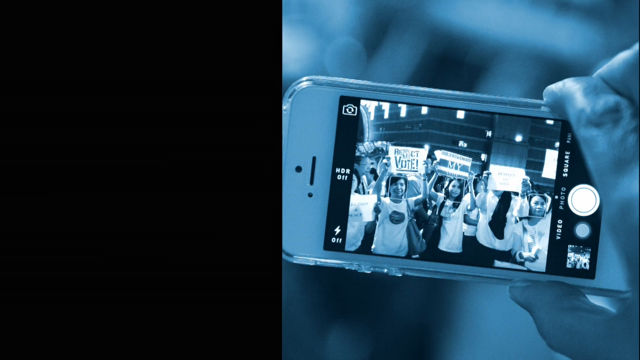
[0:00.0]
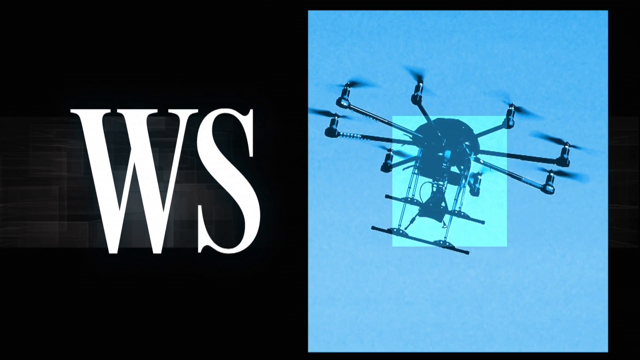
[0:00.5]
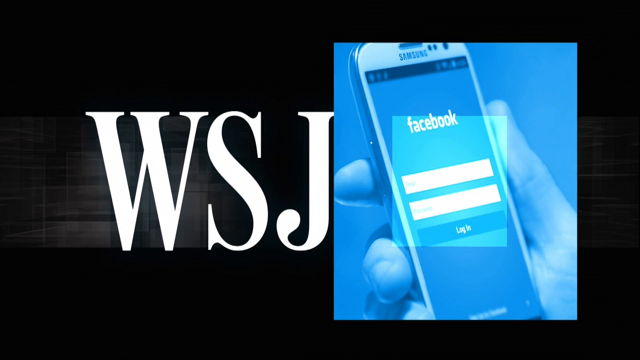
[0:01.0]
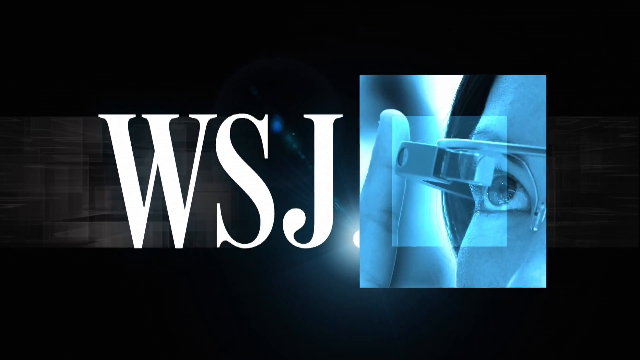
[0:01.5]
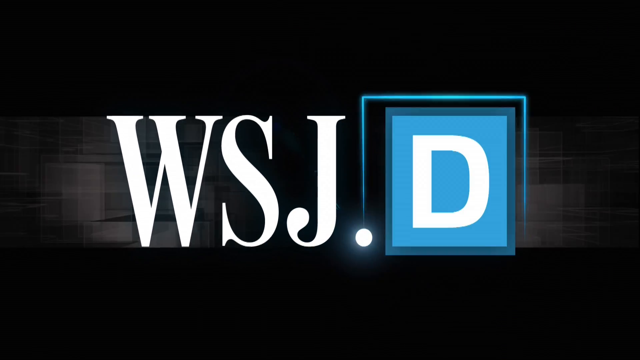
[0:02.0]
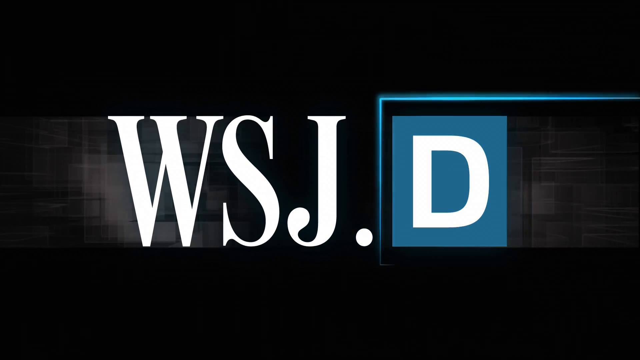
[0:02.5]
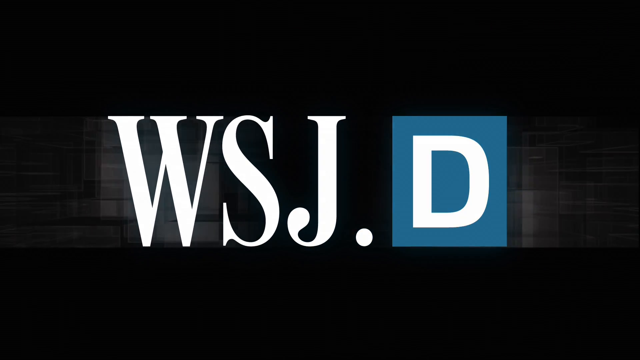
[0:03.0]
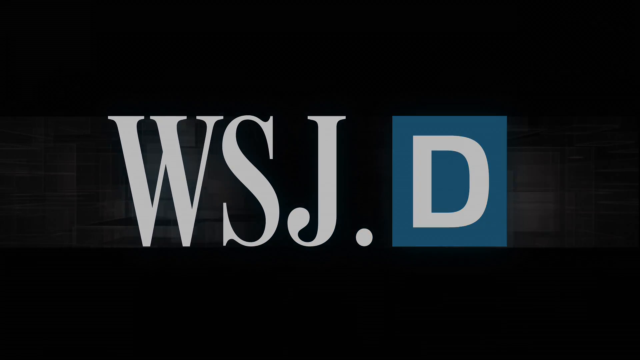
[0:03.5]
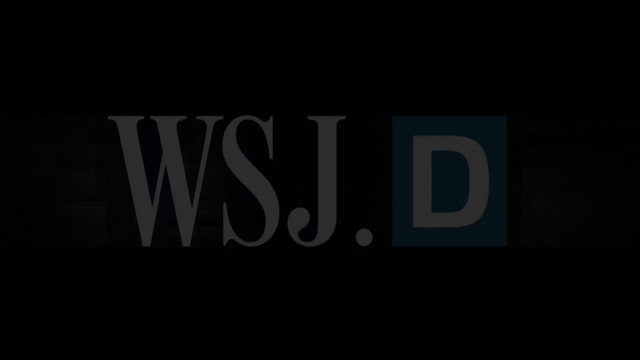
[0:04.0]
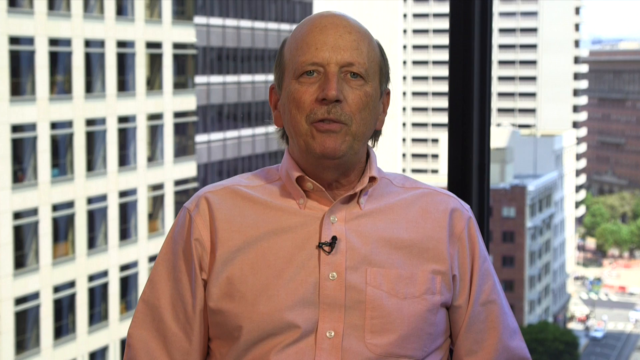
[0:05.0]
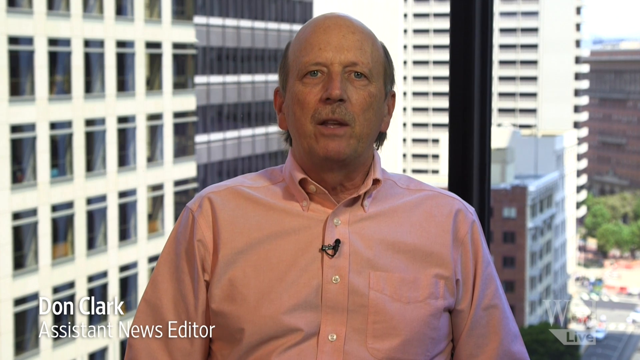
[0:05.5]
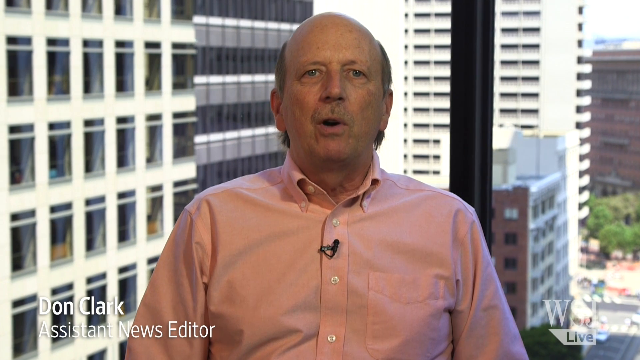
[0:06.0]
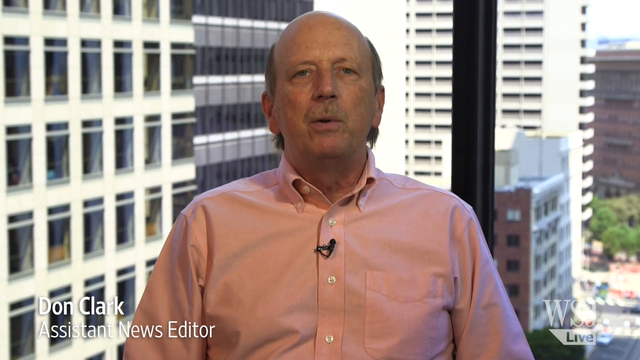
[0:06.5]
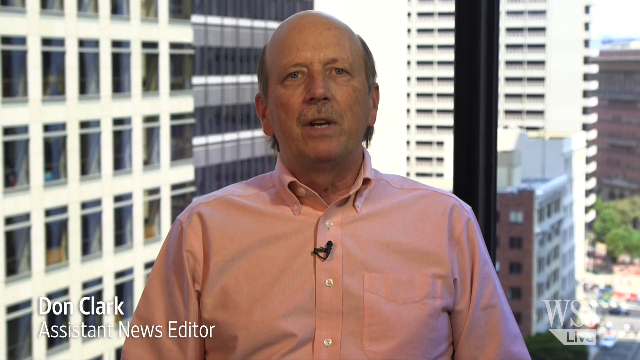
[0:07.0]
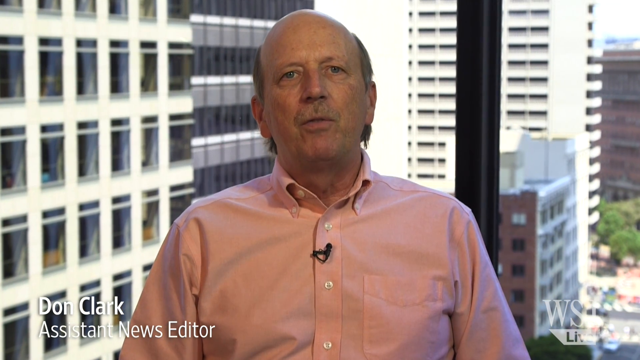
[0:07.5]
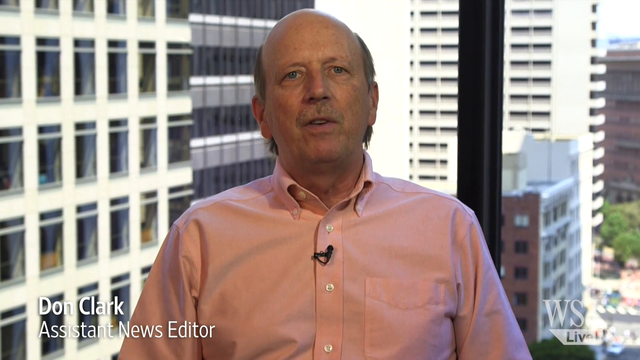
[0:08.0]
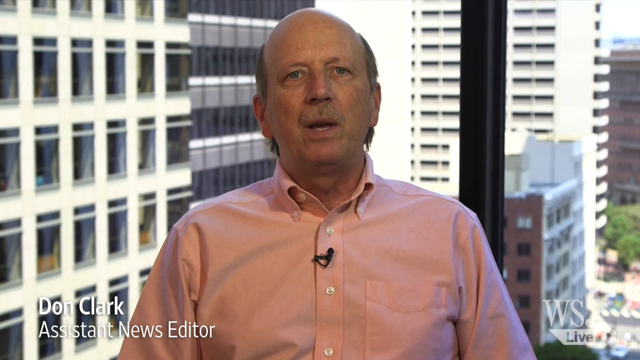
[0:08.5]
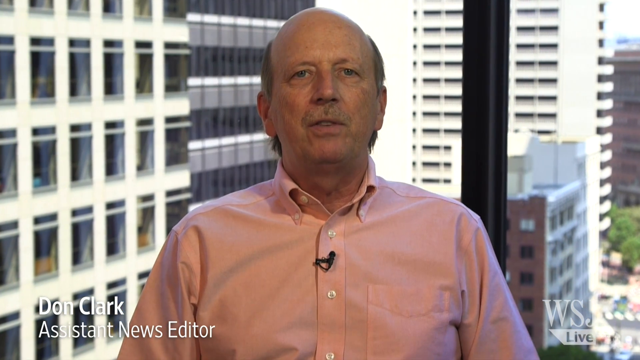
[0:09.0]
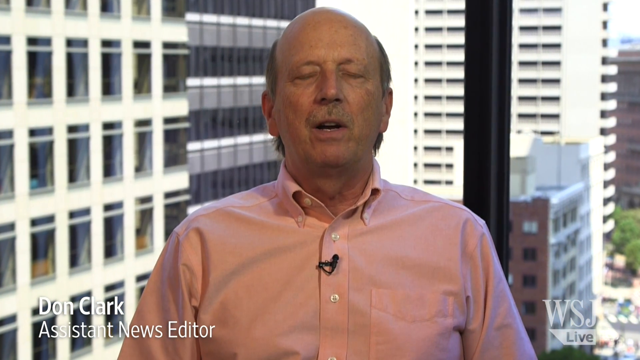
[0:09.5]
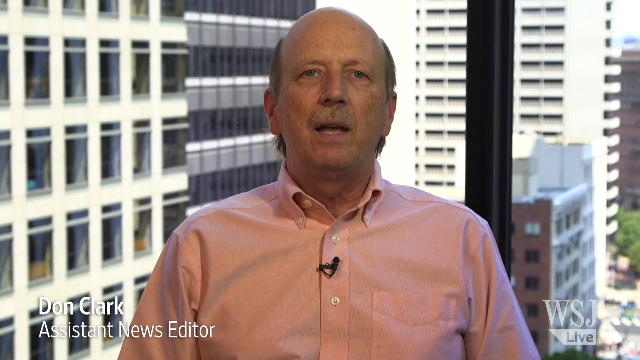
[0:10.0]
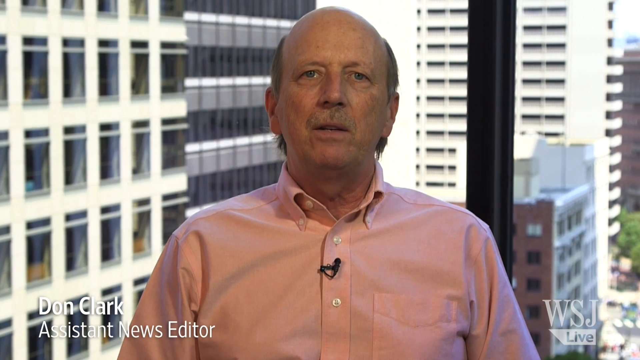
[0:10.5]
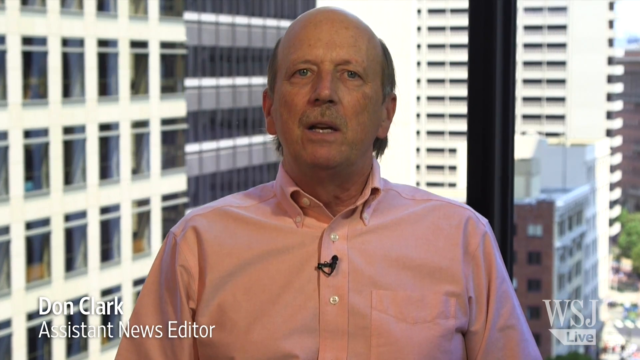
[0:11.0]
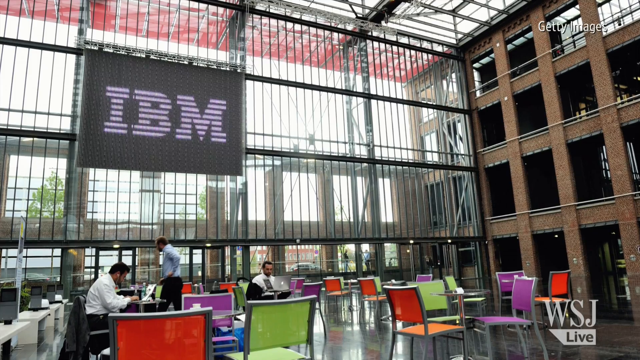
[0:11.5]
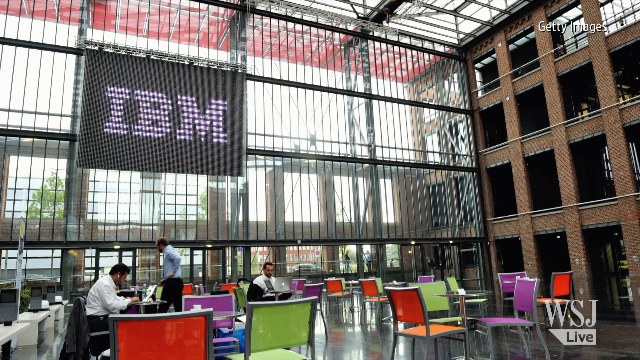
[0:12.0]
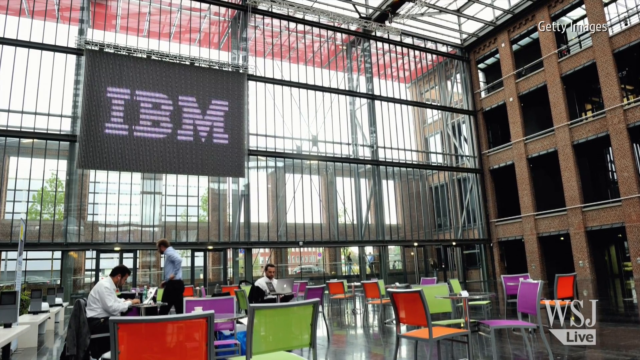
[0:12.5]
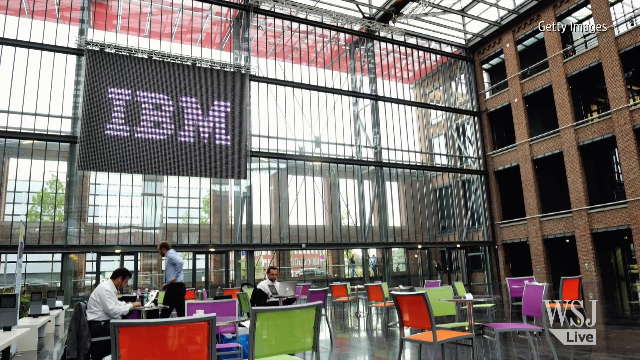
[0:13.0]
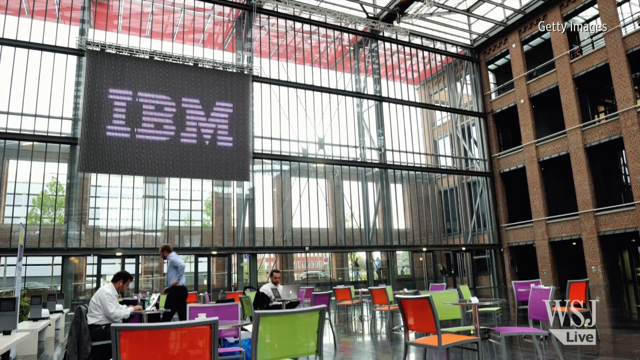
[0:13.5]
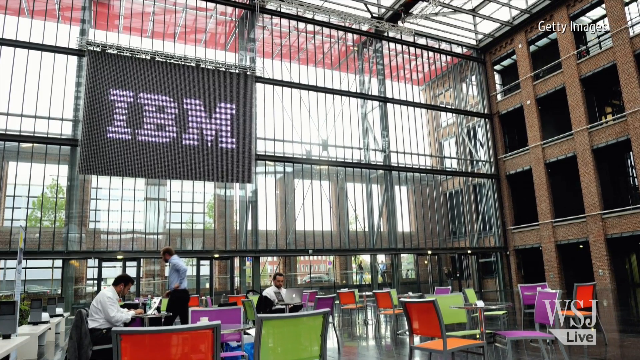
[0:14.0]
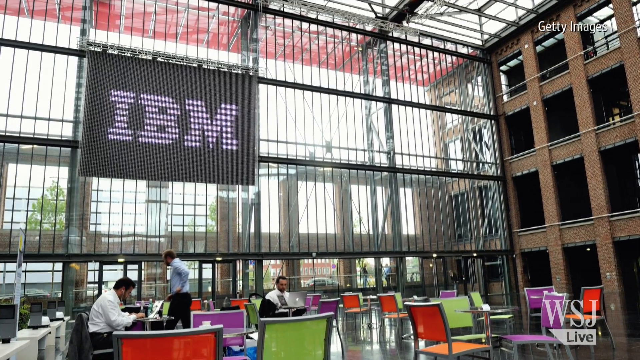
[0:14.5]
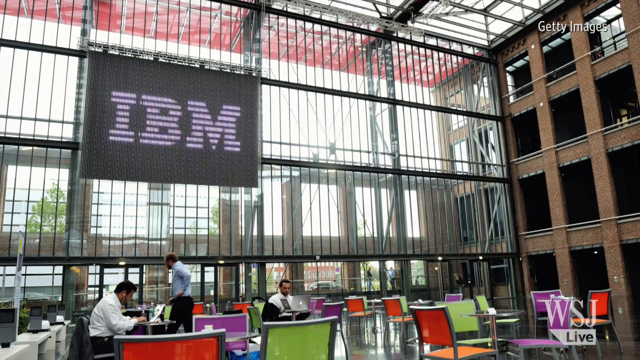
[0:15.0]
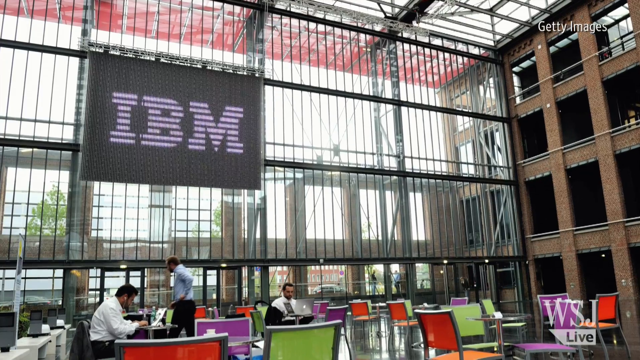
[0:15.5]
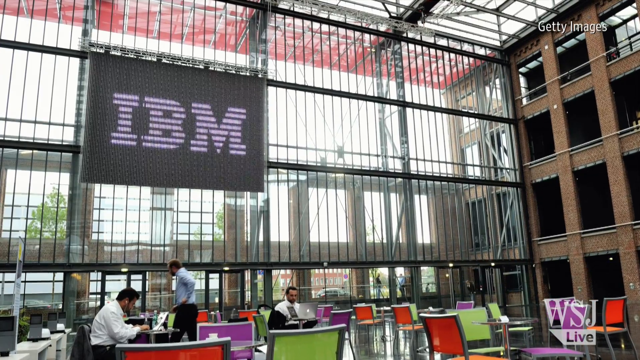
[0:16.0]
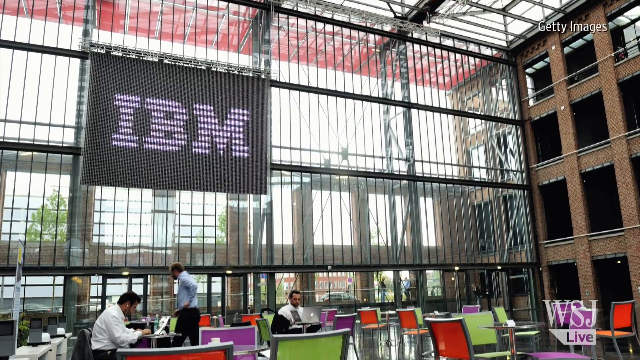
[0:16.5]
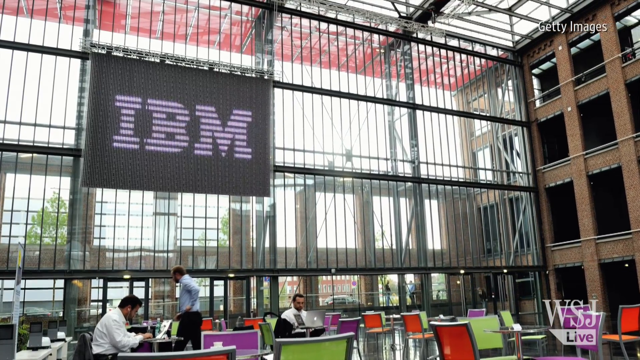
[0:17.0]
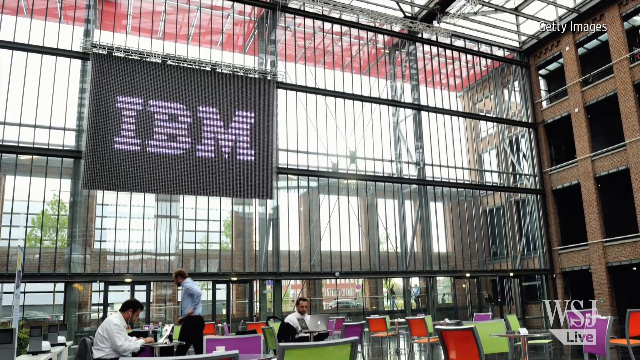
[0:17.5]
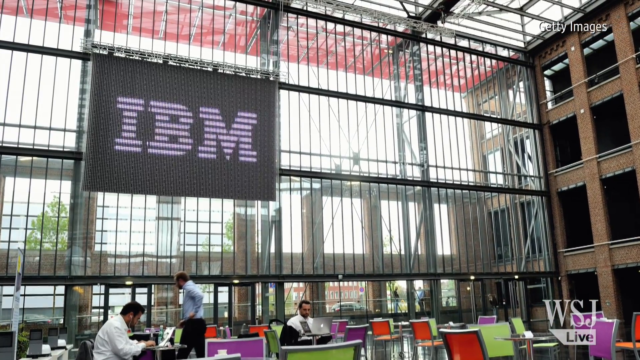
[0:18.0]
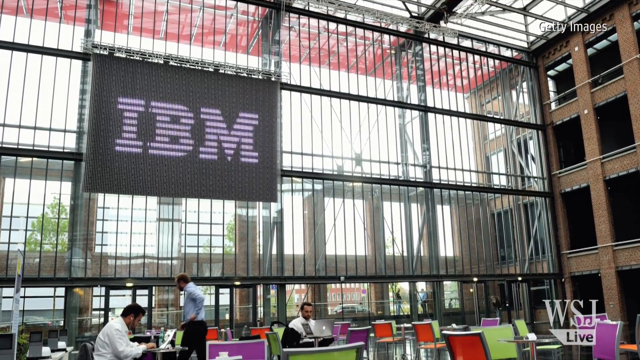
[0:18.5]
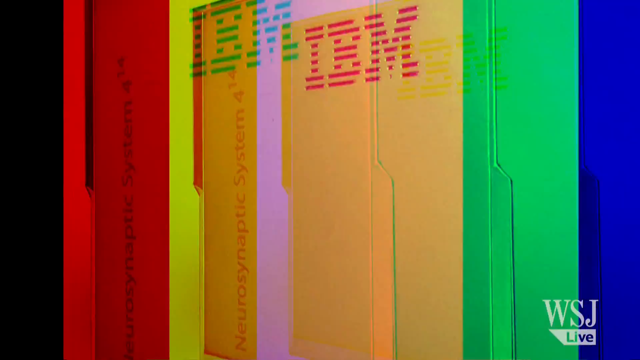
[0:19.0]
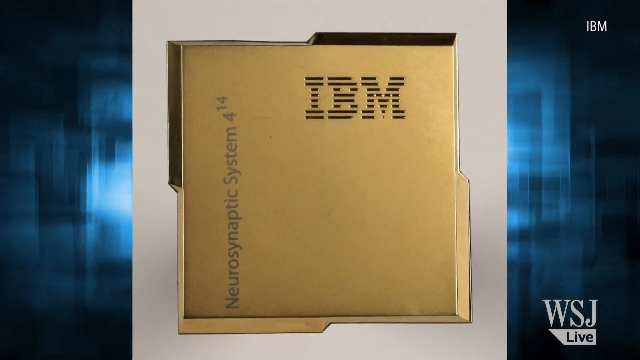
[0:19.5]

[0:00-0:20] "WSJ.D" is written in white in a blue box. A man identified as Dan Tleck, a news editing assistant, appears wearing a pink shirt with a black mic on it. He is behind tall buildings that have many windows. The news concerns an IBM system, a neurosynthetic system. A hand holds a phone, and the phone shows what is like a black-and-white photo of people who look like they are striking in a protest. The people hold written charts in their hands, as if they are demanding something. There is also a throne, and the word "Facebook" is written there. The IBM office shows people seated and many chairs.